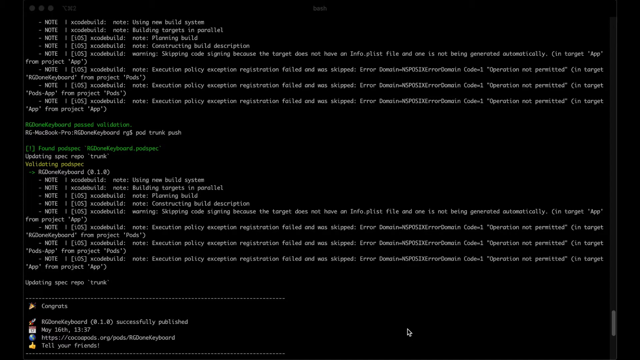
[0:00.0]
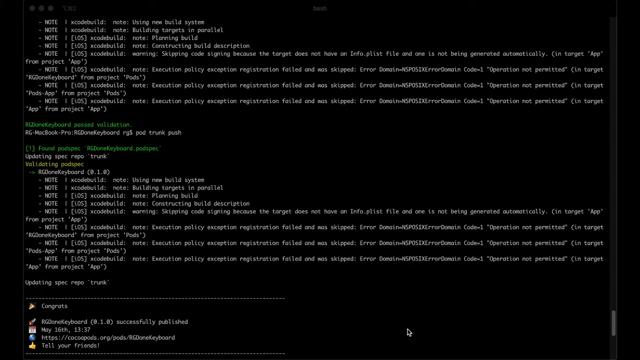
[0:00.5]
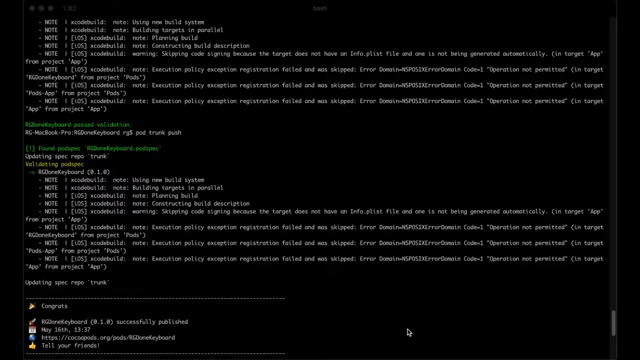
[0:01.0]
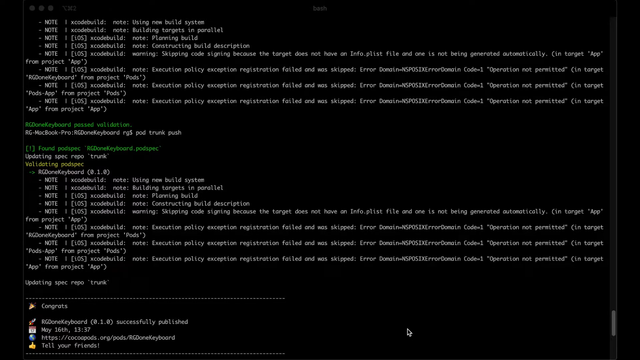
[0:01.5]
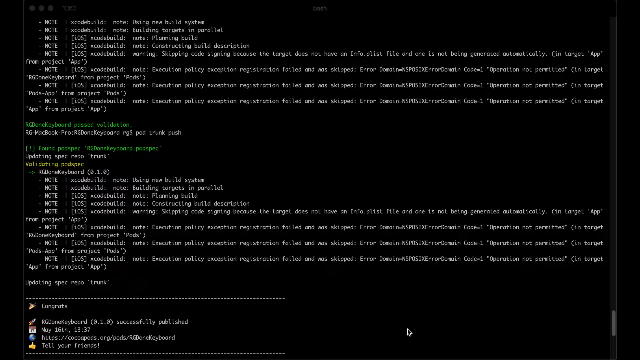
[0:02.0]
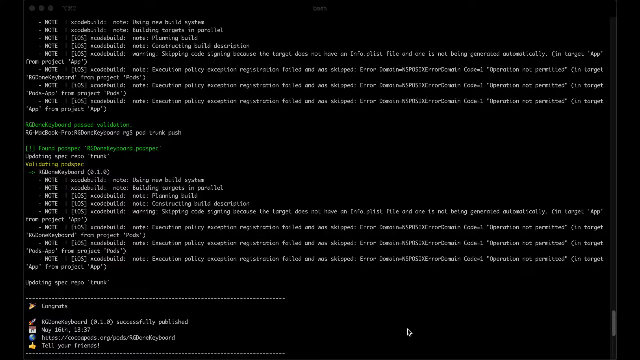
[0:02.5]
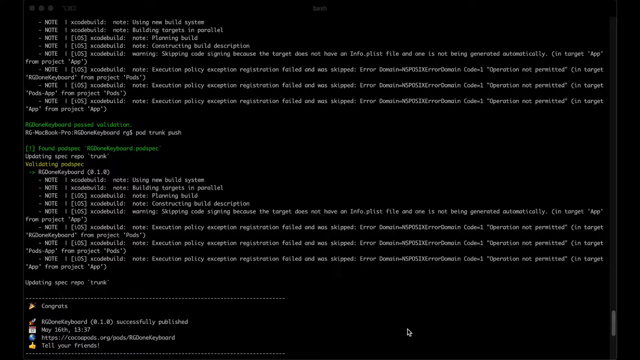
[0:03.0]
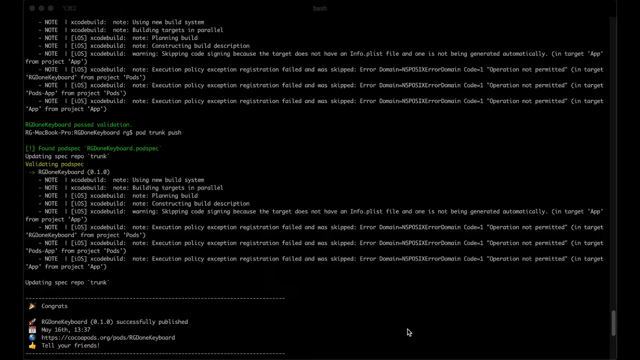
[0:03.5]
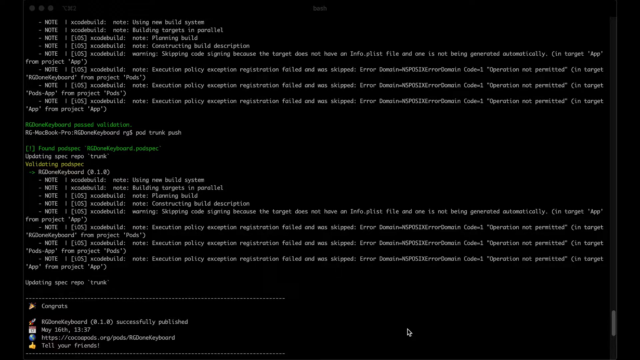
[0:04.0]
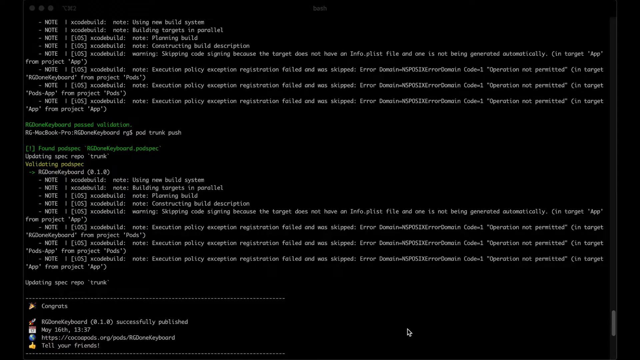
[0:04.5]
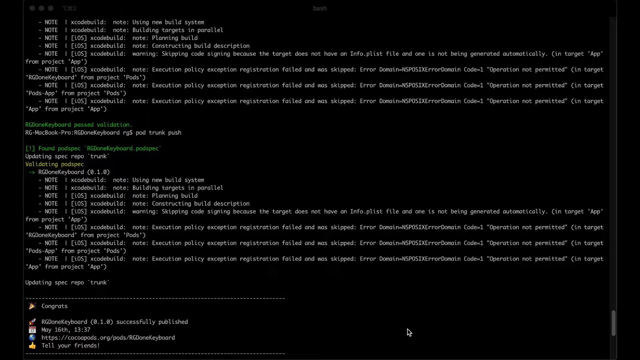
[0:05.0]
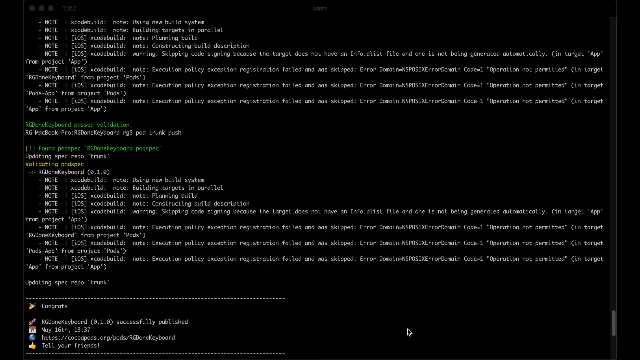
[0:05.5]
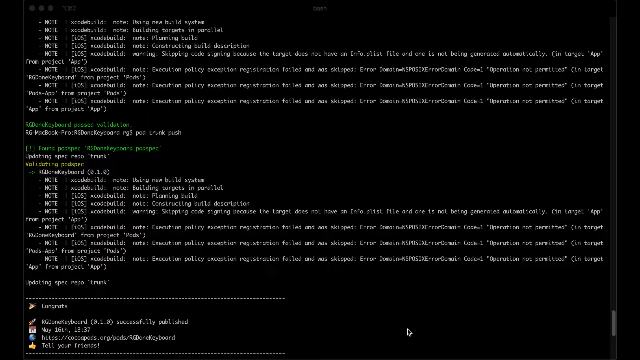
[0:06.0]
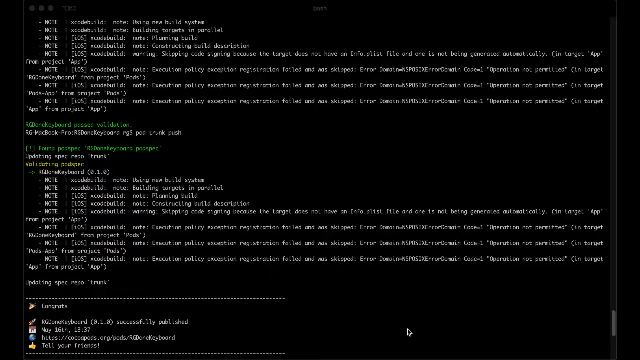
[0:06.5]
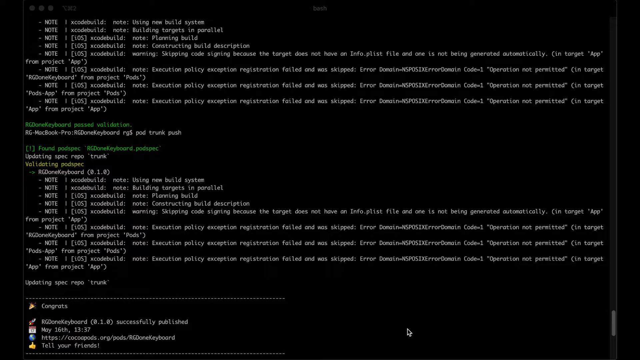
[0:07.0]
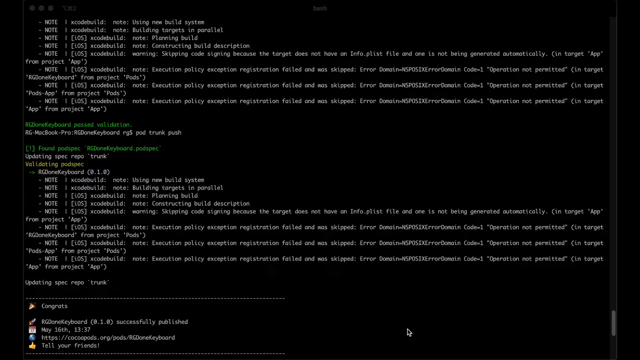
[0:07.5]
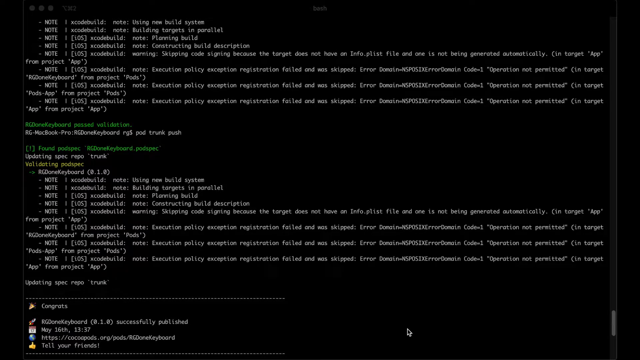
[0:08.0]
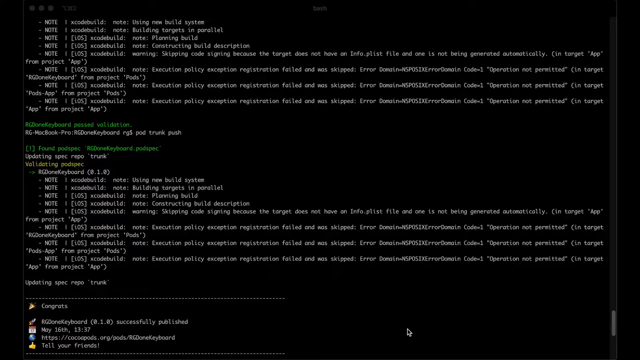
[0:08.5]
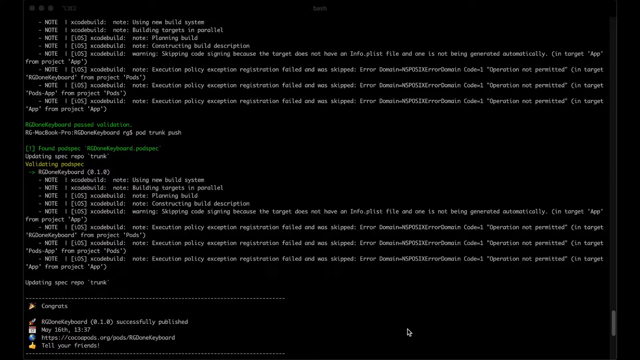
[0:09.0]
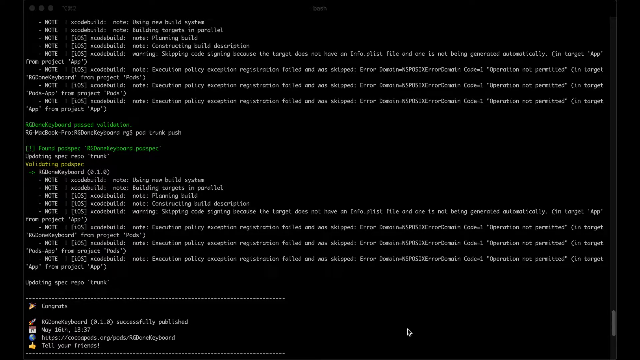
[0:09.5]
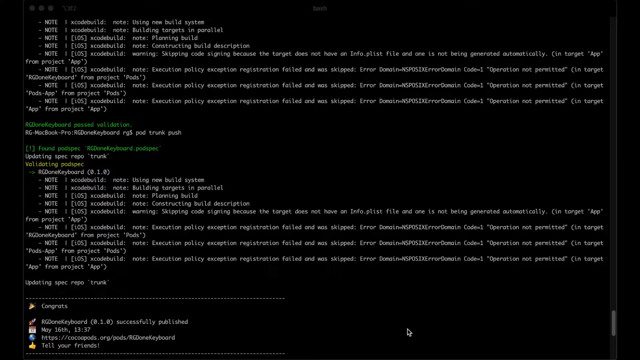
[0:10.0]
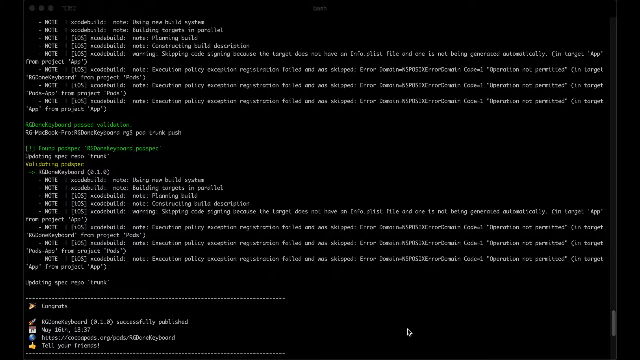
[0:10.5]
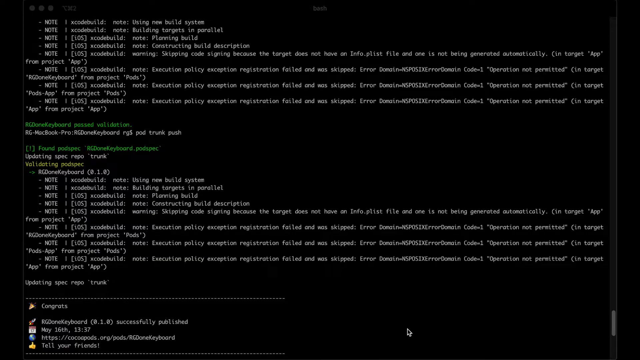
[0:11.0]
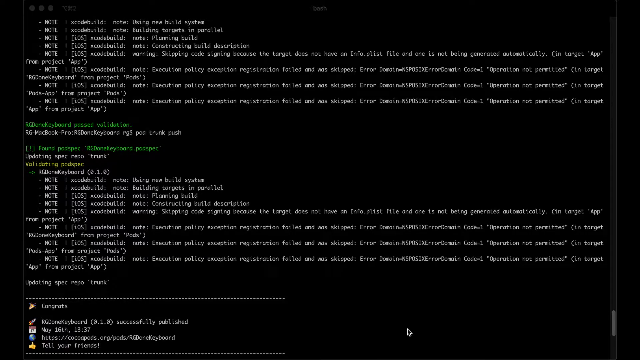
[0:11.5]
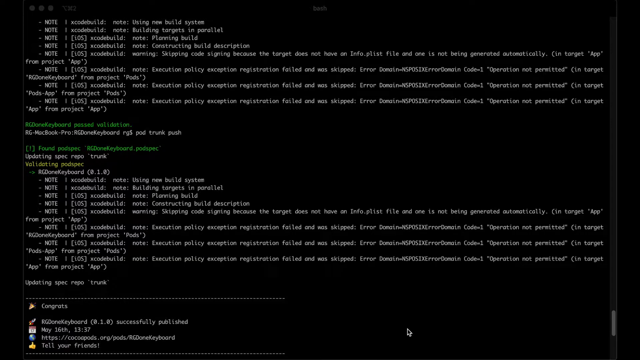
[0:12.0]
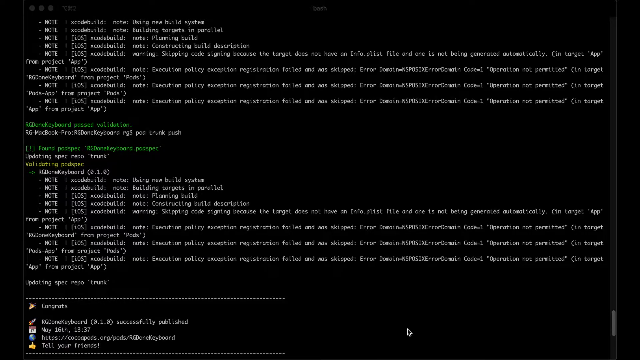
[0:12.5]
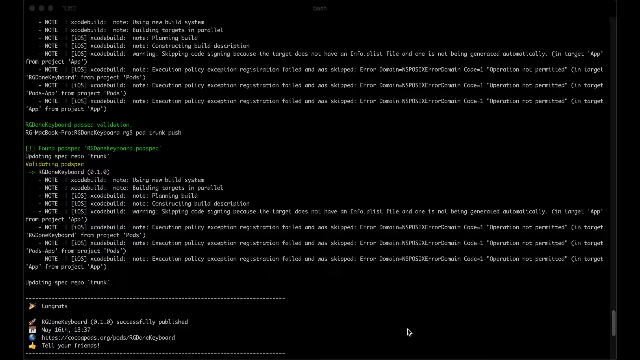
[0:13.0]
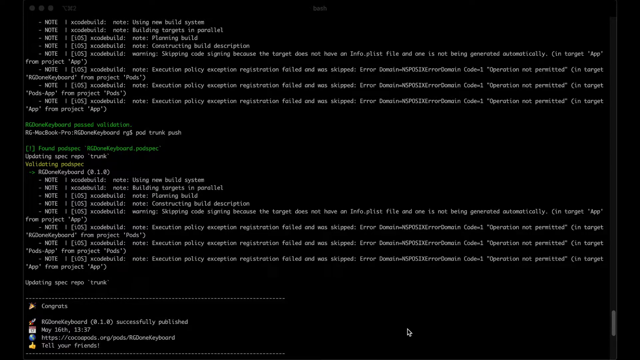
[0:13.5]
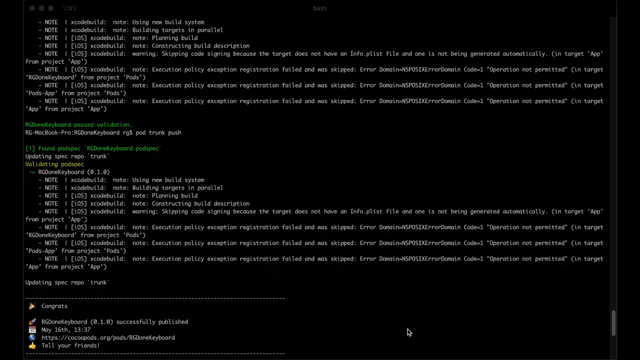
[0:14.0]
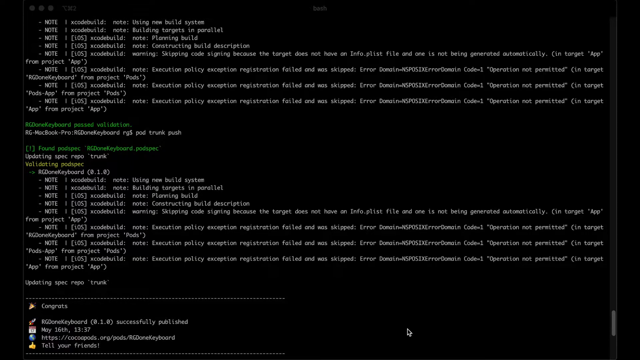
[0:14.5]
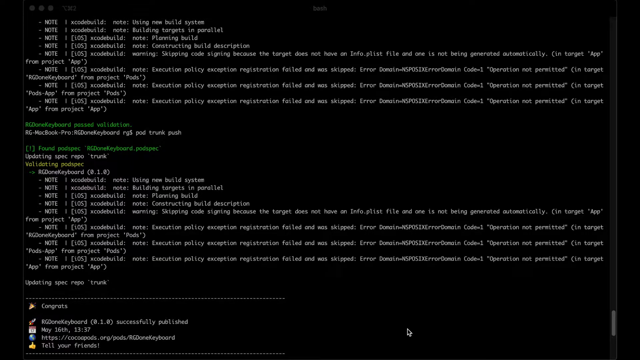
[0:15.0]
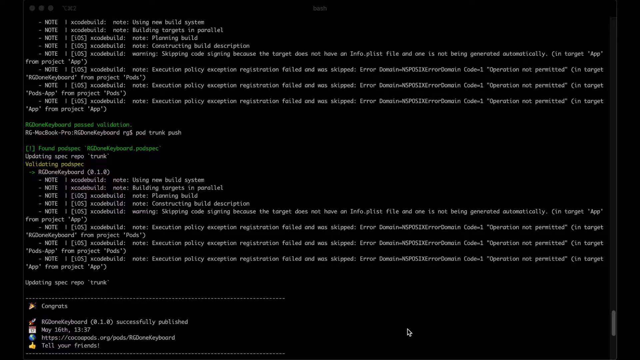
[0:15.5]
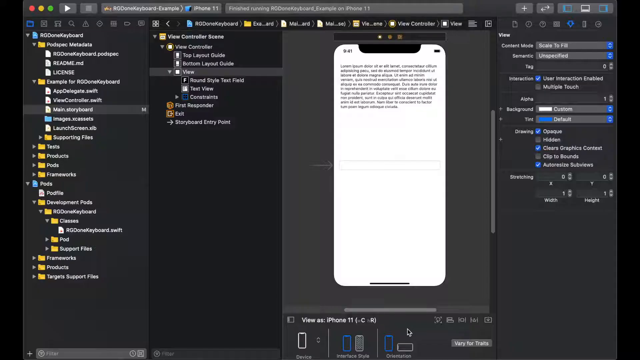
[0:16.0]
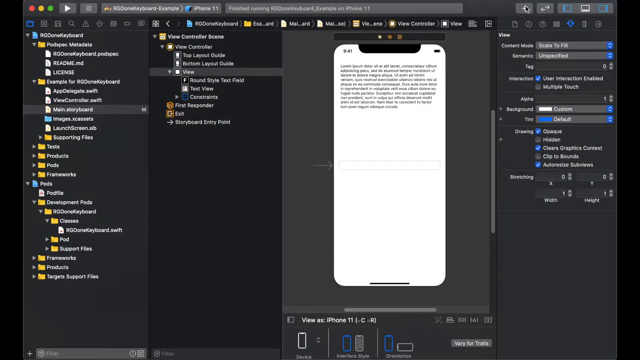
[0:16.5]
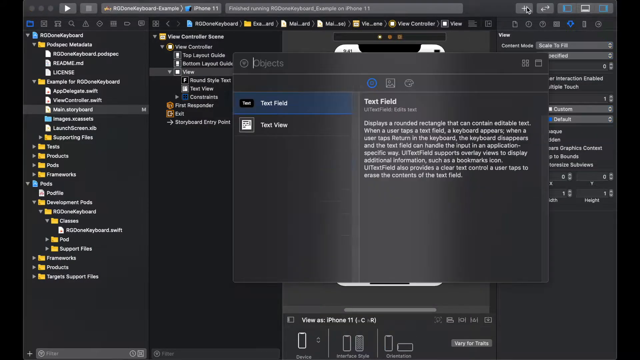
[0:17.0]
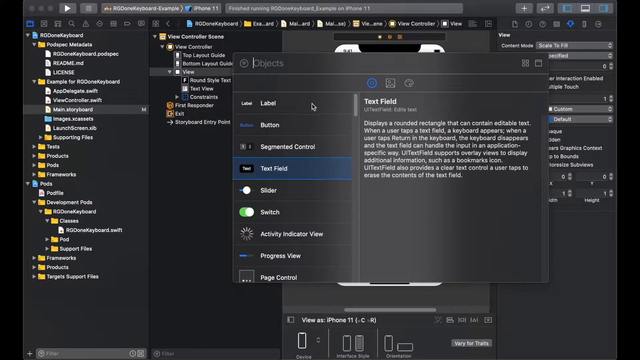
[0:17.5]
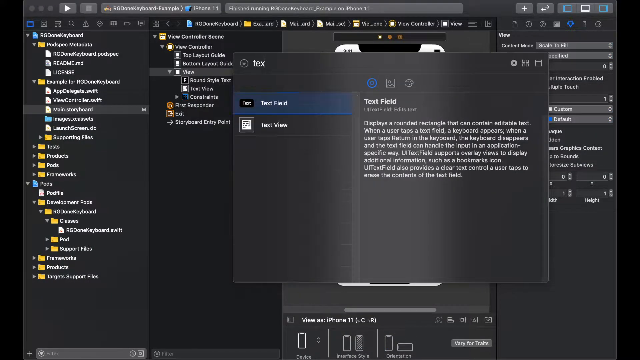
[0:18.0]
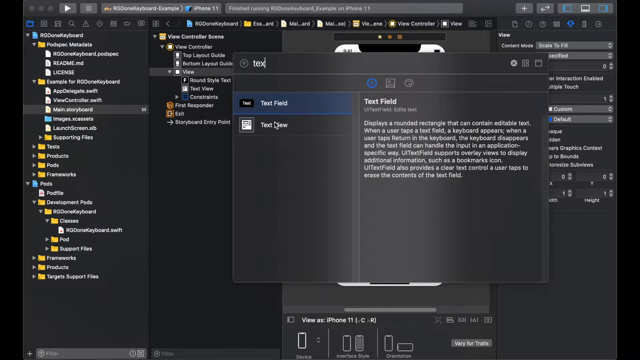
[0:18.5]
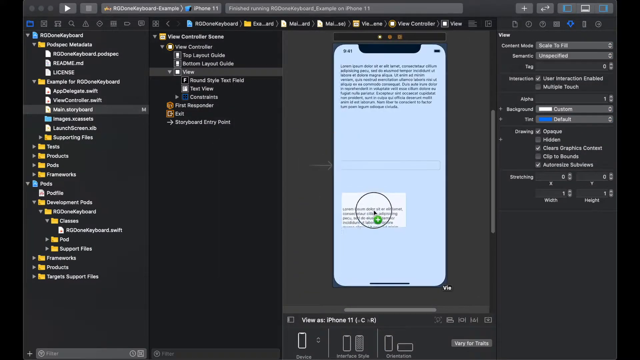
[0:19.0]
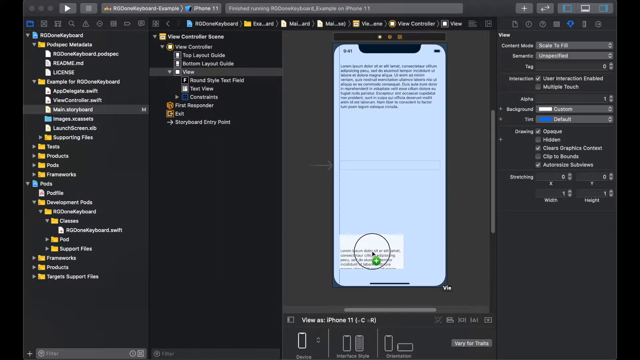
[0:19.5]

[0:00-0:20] A command prompt screen shows a lot of small writing in white, green and some yellow text. One sentence repeated many times on the screen is "execution policy exception registration failed and was skipped, error", followed by a string of text, "operation not permitted". The command prompt screen stays up for some time. Then a file explorer screen appears. On the left-hand side is the file directory, opened on view controller scene. On the right-hand side is a view with some settings shown. In the middle of the screen is an image of a mobile phone screen with some text on it. The screen moves to a text field that is being completed, and the cursor drags something down. In the final moments, the cursor drags the completed text field and places it in the bottom lower left corner of the phone screen.